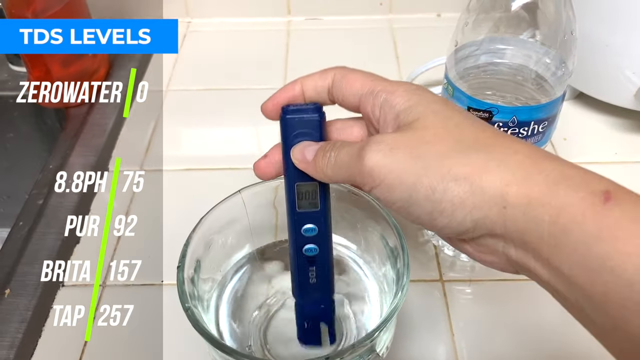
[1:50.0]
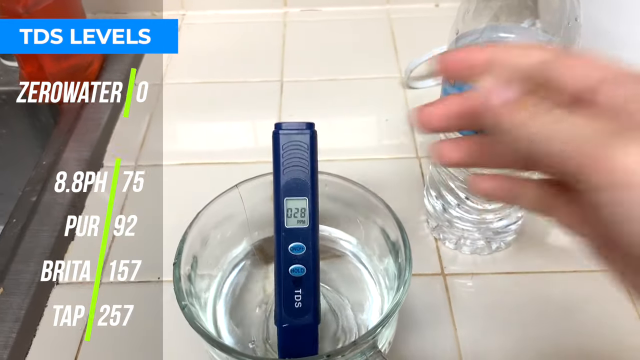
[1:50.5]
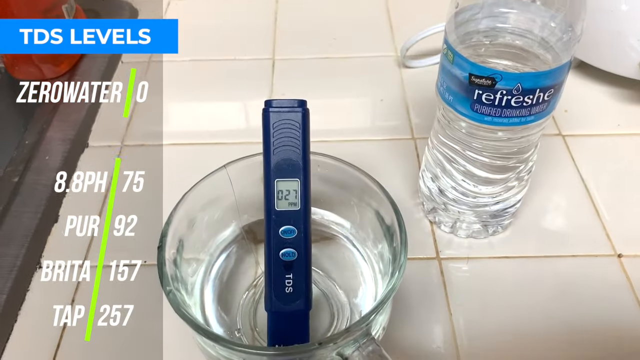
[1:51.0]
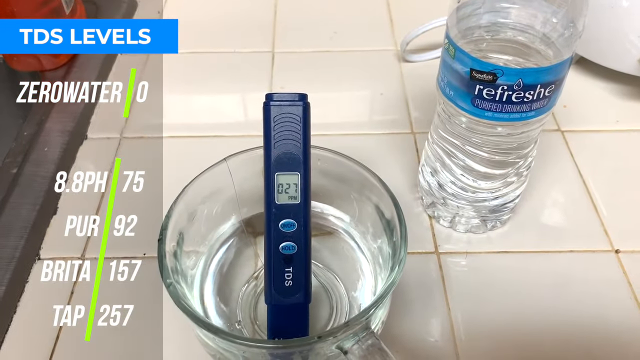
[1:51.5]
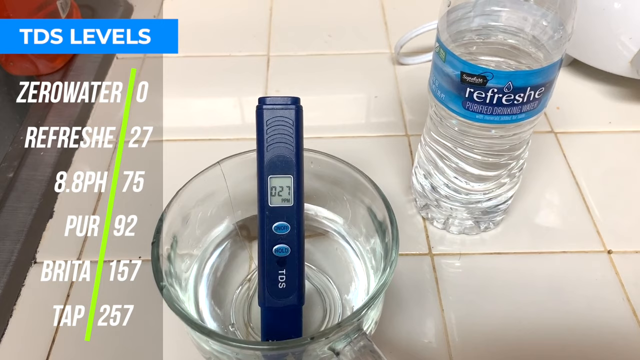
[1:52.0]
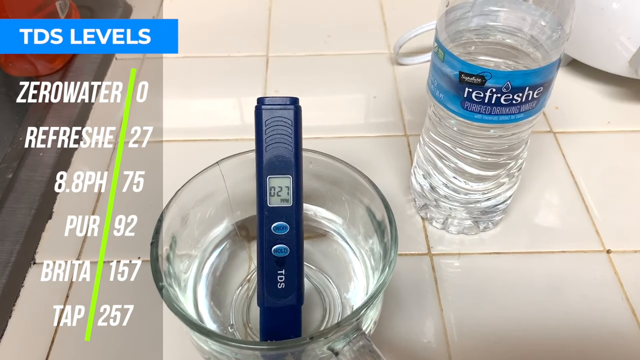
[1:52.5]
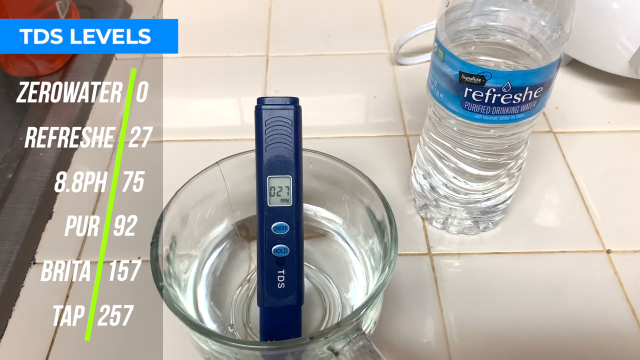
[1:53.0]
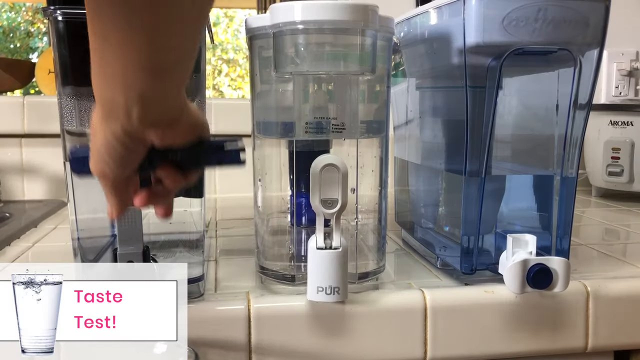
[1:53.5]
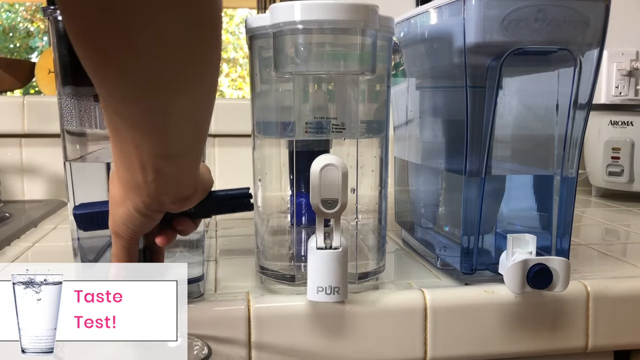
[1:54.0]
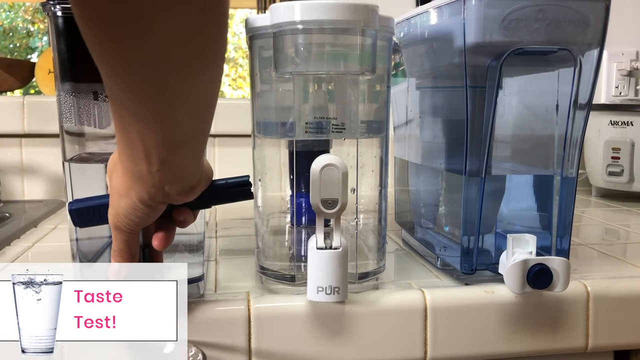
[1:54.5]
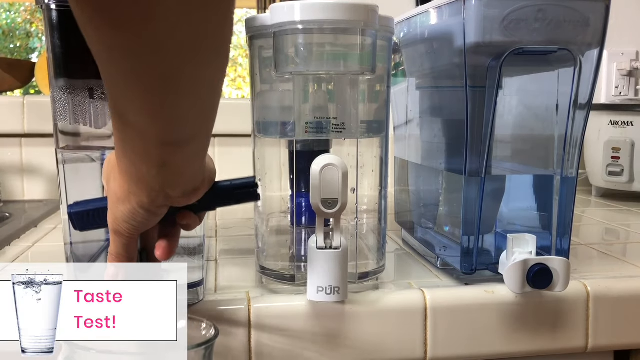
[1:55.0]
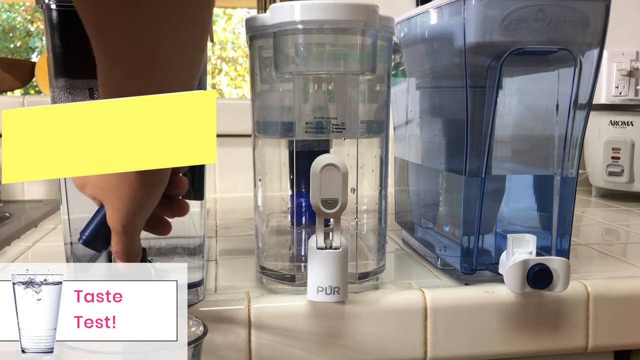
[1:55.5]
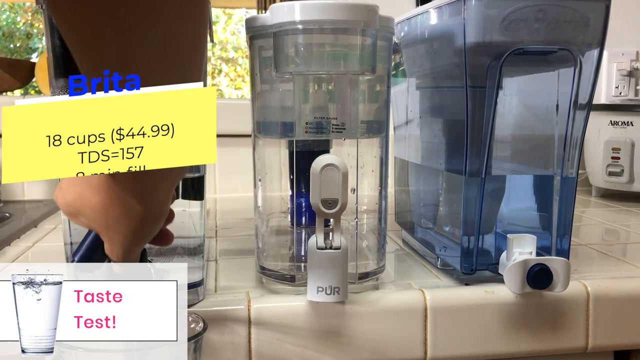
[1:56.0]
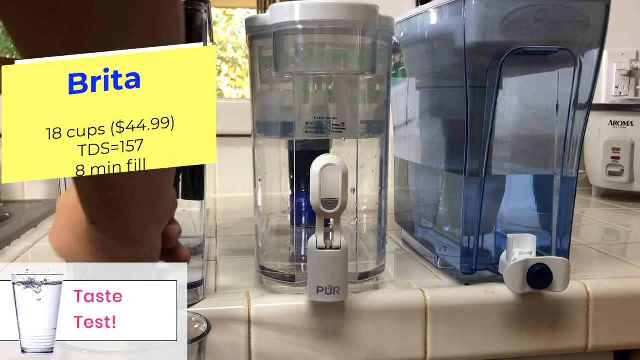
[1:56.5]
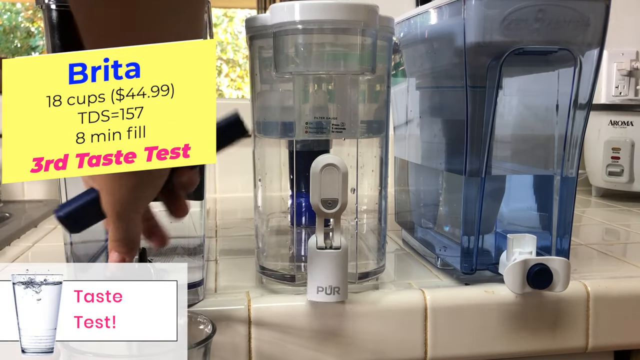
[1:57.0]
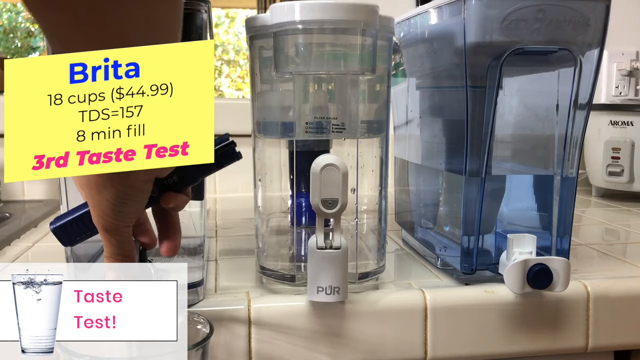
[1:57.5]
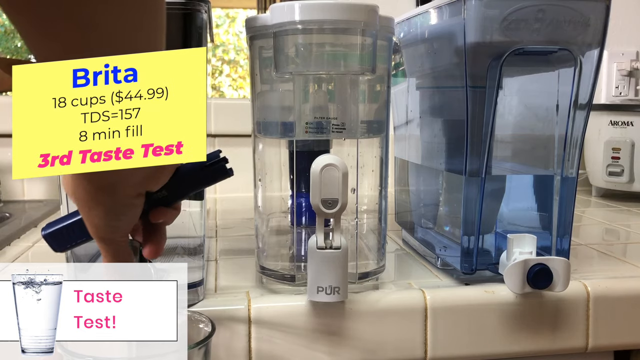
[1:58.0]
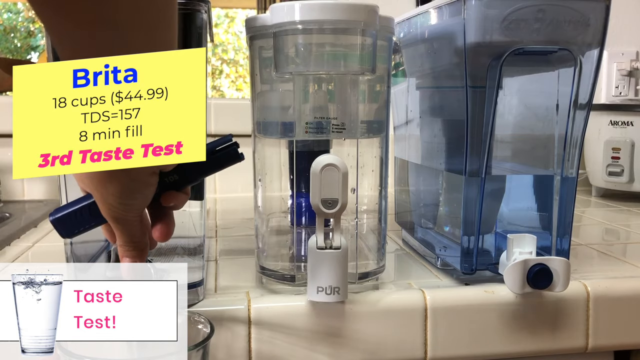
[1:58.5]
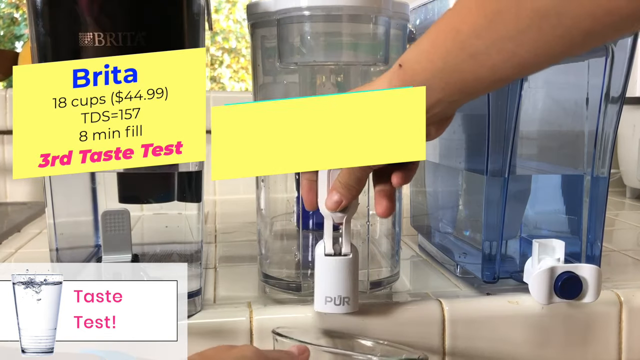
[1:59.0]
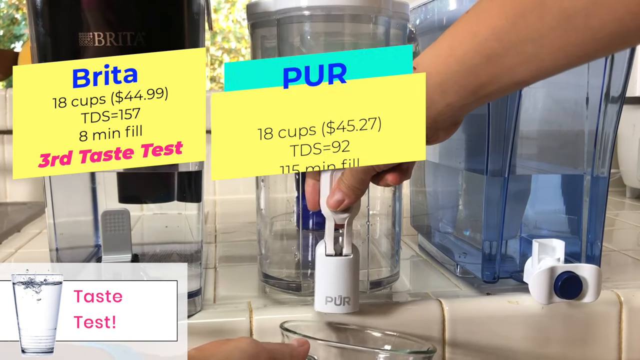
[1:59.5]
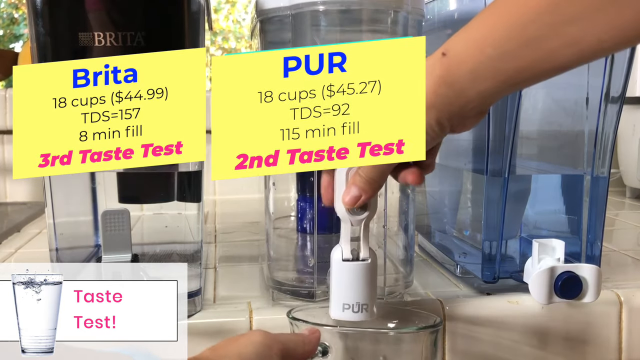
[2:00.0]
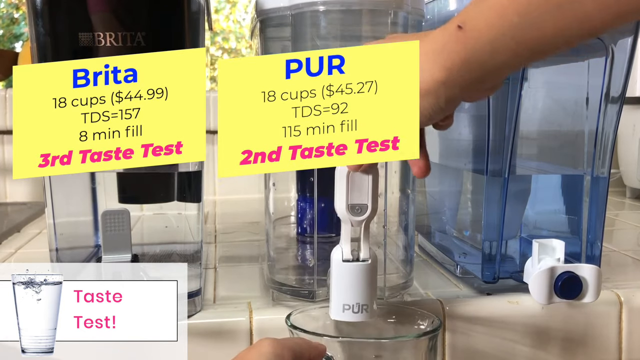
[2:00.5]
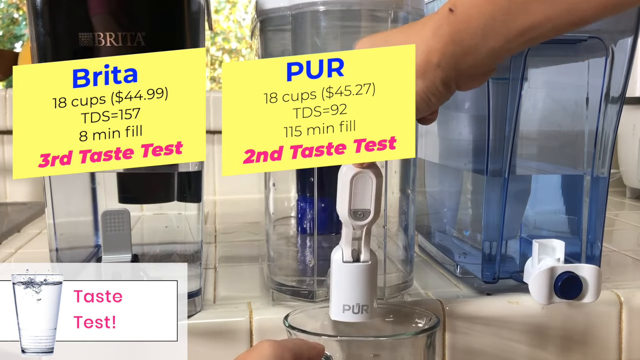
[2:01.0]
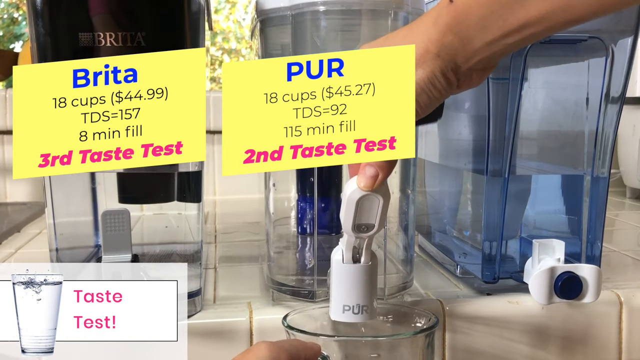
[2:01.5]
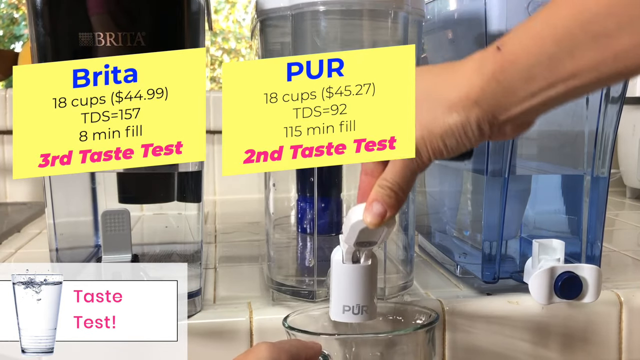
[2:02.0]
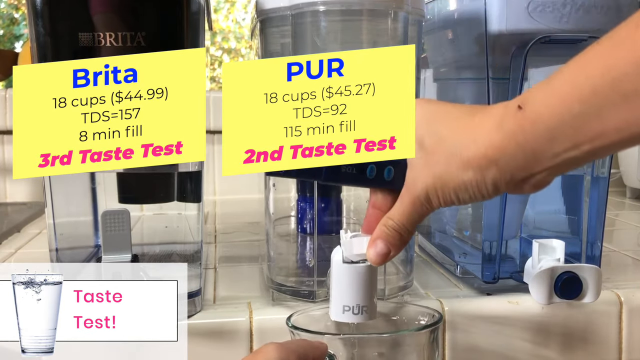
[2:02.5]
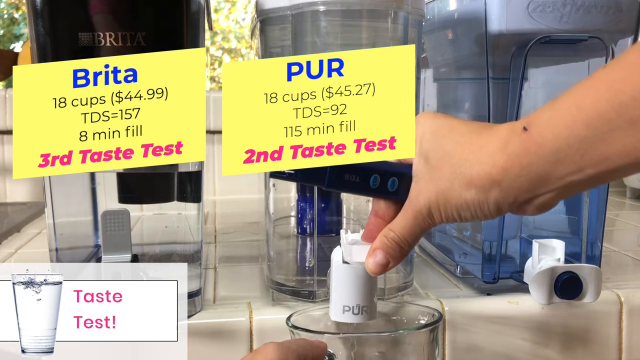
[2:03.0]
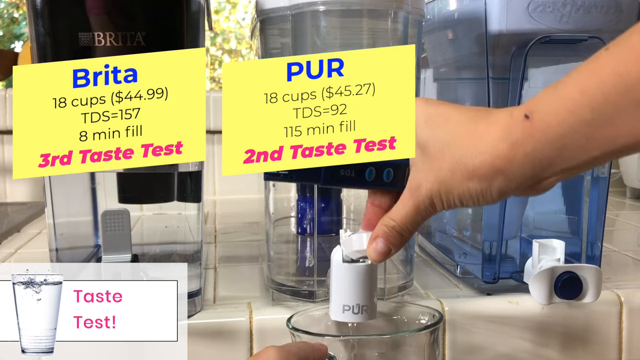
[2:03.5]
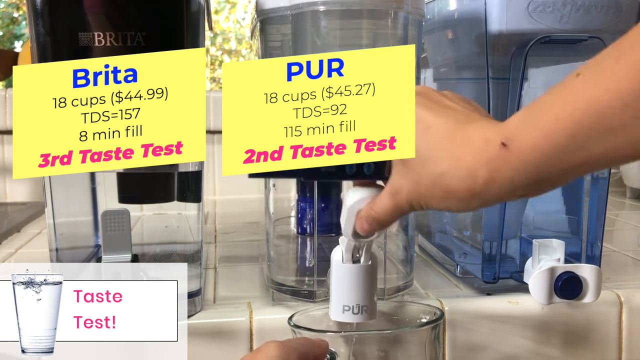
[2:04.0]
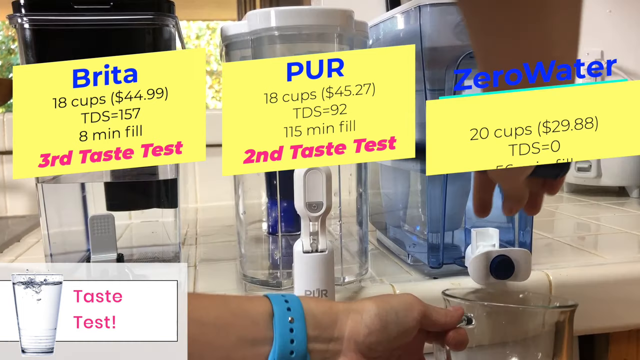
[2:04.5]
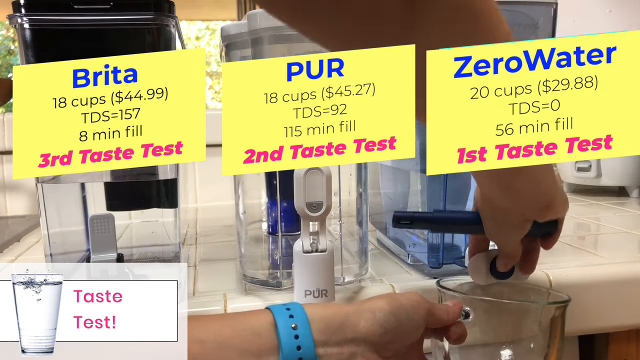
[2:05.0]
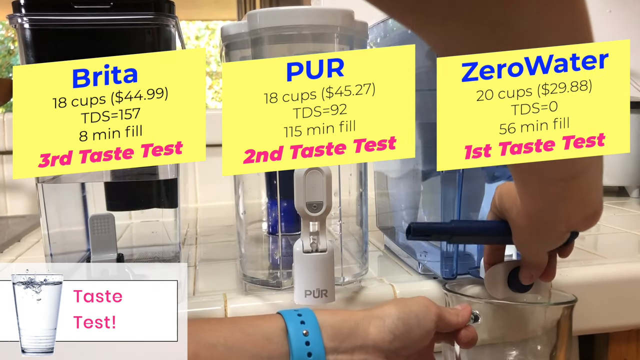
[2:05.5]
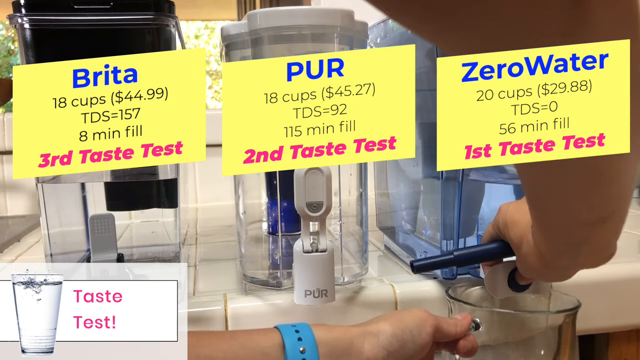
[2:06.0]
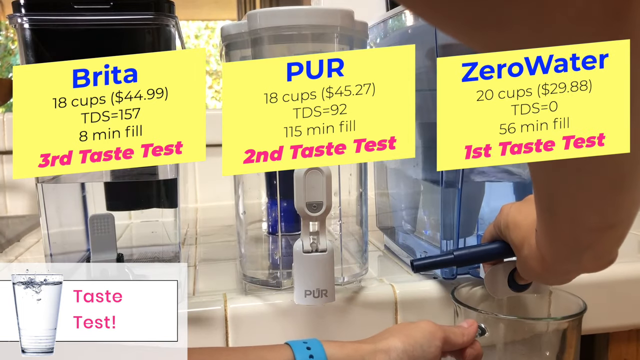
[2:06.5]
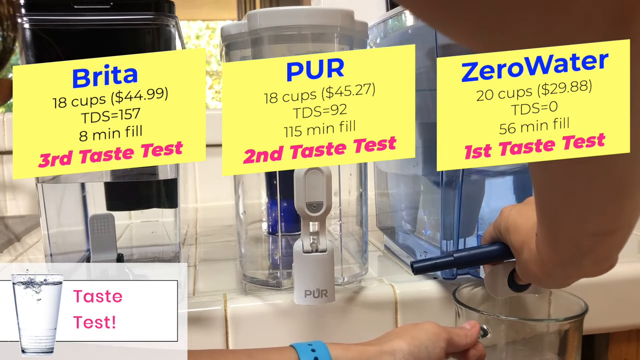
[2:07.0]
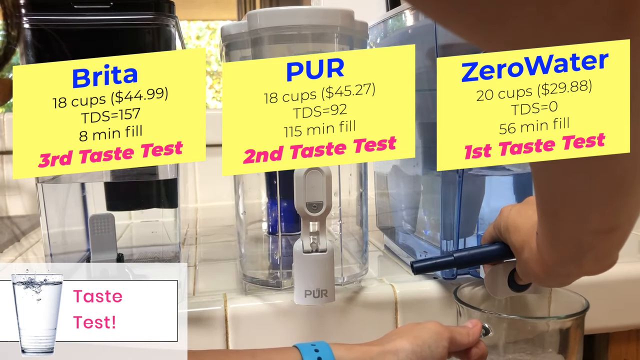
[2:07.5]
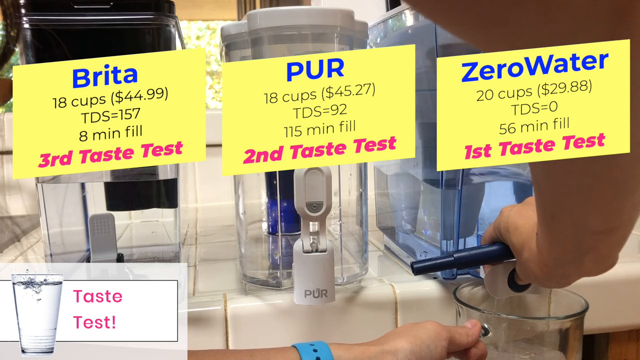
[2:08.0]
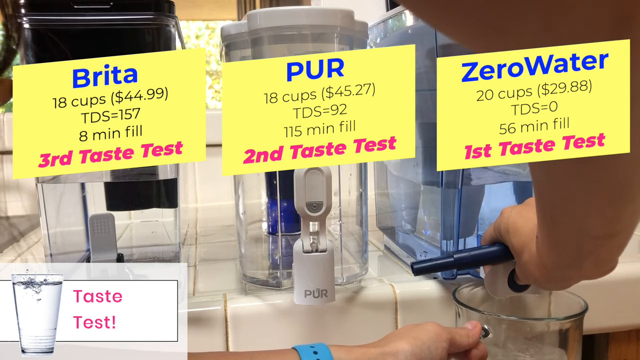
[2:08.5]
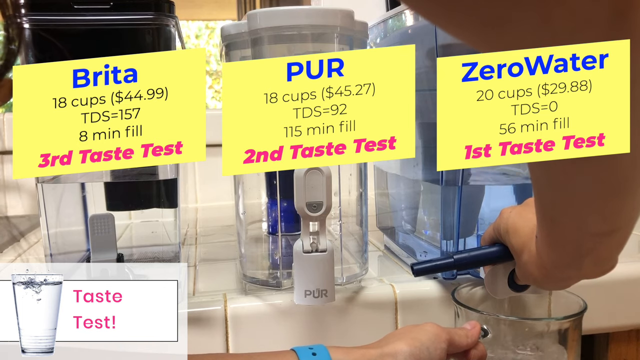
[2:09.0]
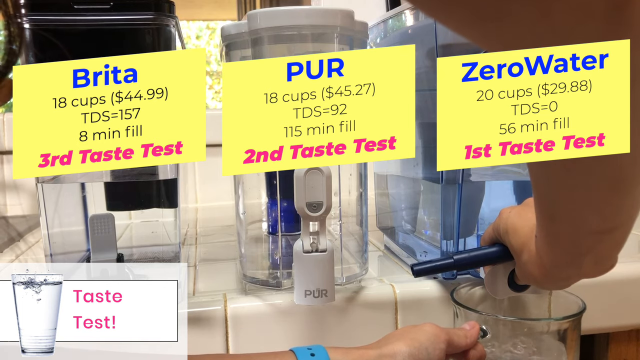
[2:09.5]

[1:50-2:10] The person dips the TDS level indicator into another type of water, a bottled brand called Refresh, in the same glass cup on the same white counter; Refresh is the second lowest after Zero Water. Next, the same person uses the three filters from earlier, Brita, Purr, and Zero Water, for a taste test. Brita is poured first, shown with its comparison: 18 cups at $44.99, a TDS of 157, and an eight-minute fill time through the filter. Purr is tested second, with 18 cups at $45.27, a TDS of 92, and a 111-minute fill time through its filter. Zero Water, at 20 cups for $29.88 with a TDS of zero and a 56-minute fill through its filter, is poured last off the counter. Three gallons of water are shown at the end.